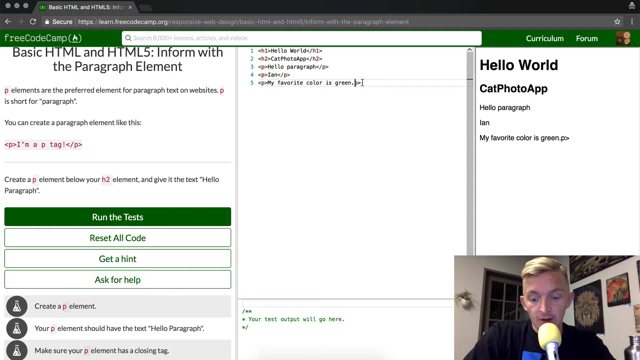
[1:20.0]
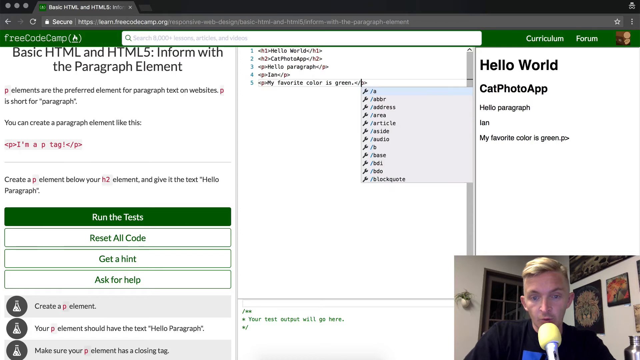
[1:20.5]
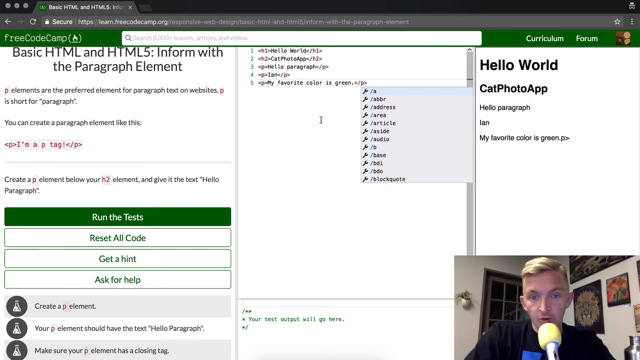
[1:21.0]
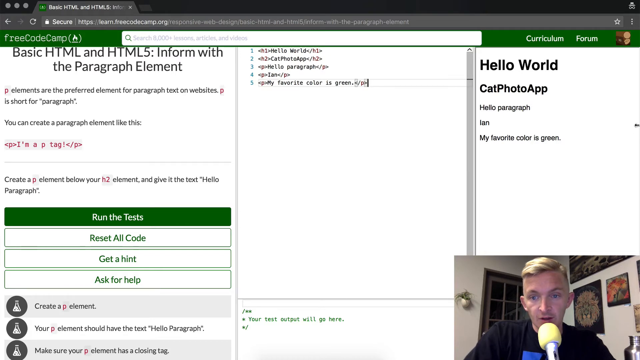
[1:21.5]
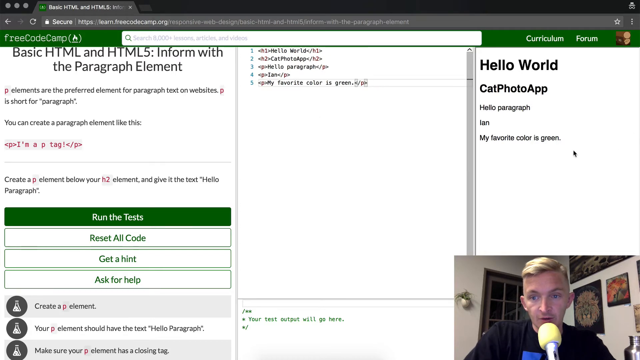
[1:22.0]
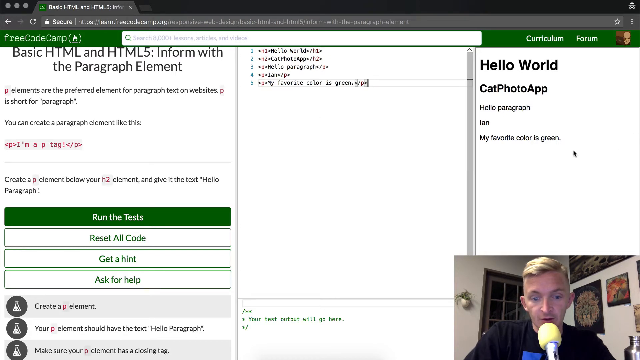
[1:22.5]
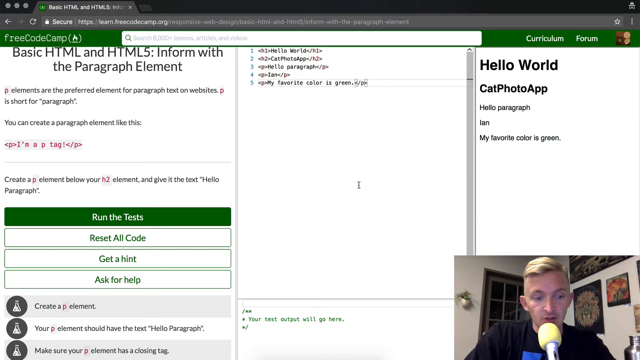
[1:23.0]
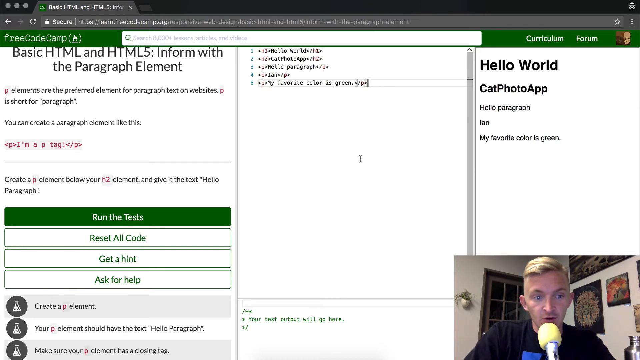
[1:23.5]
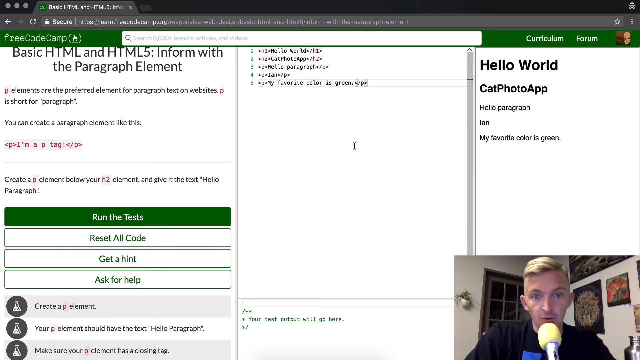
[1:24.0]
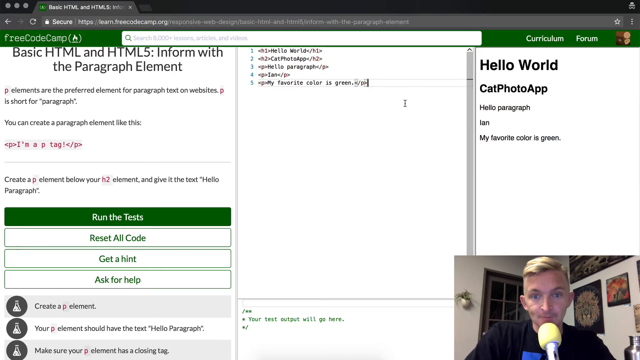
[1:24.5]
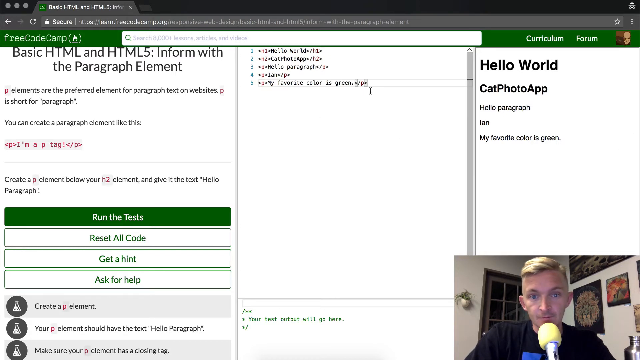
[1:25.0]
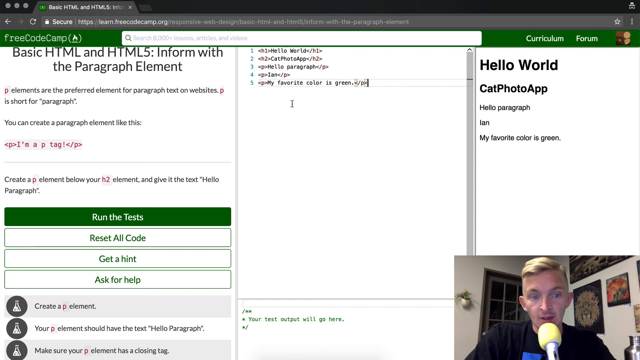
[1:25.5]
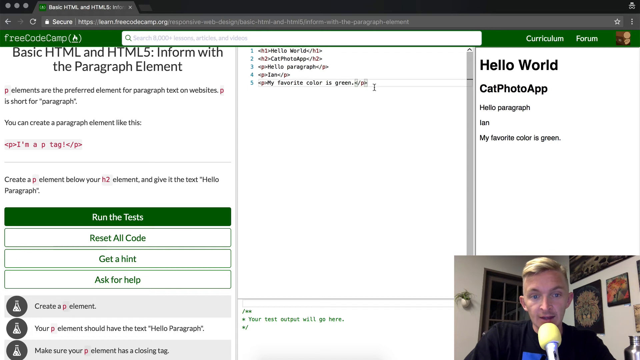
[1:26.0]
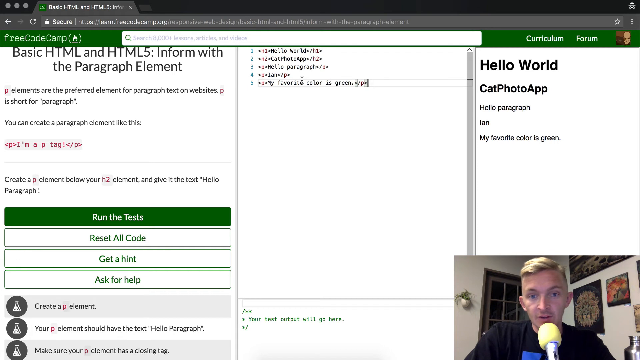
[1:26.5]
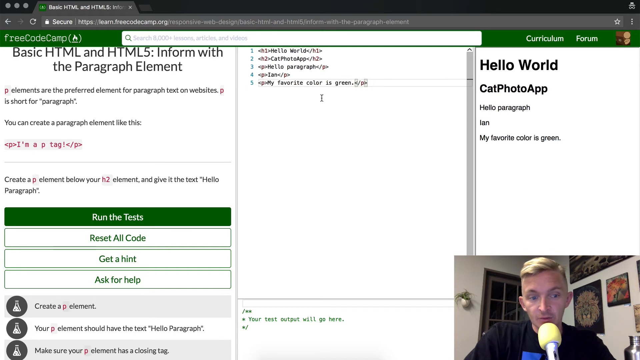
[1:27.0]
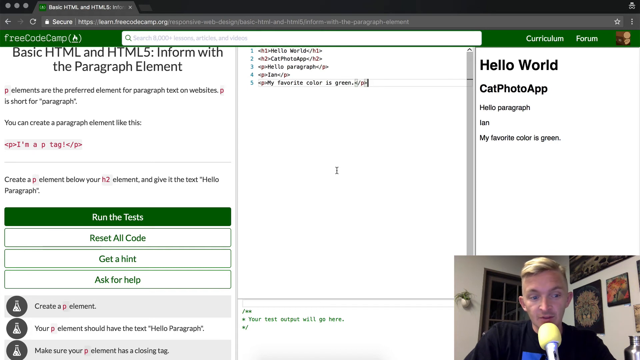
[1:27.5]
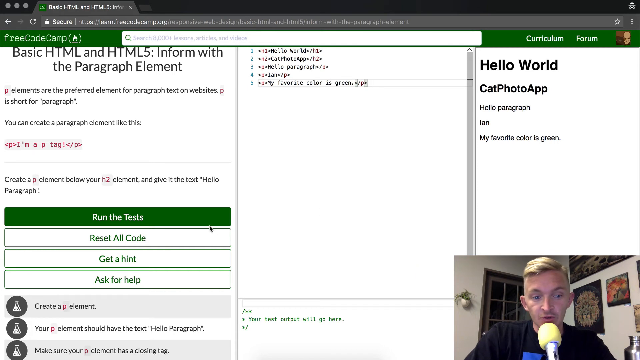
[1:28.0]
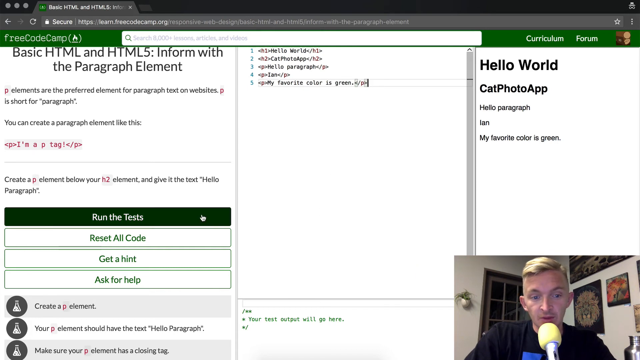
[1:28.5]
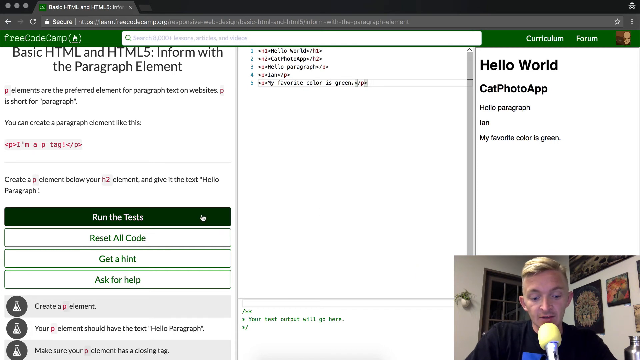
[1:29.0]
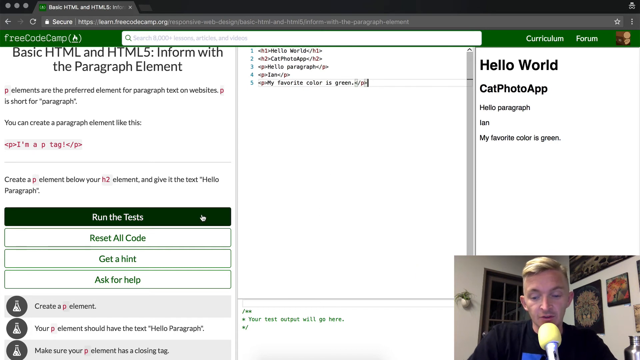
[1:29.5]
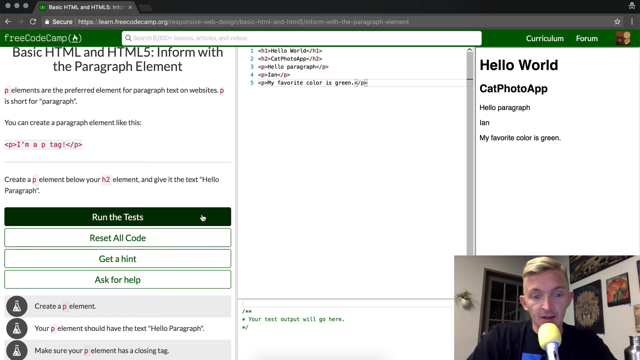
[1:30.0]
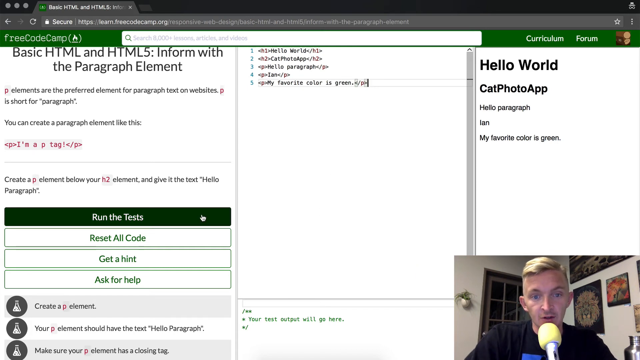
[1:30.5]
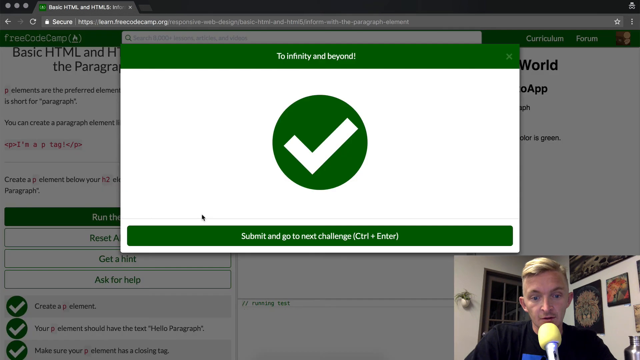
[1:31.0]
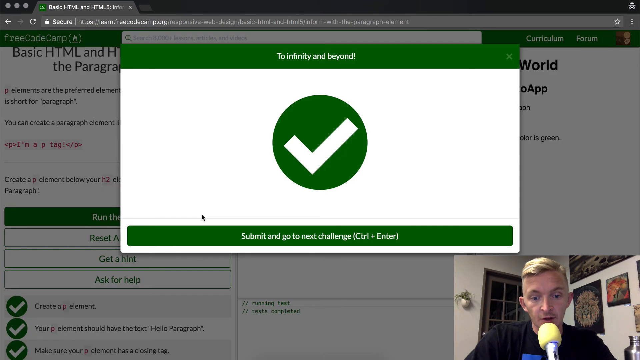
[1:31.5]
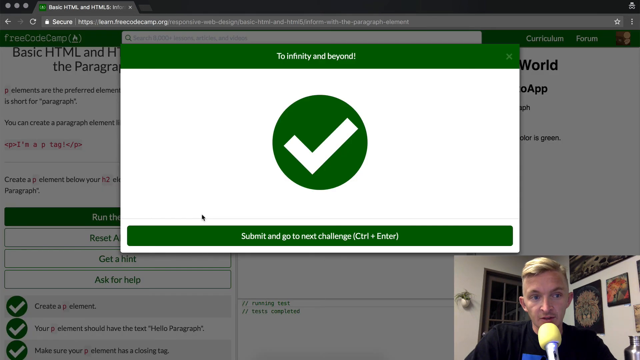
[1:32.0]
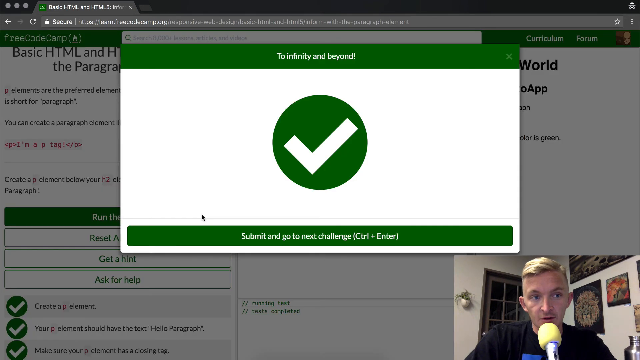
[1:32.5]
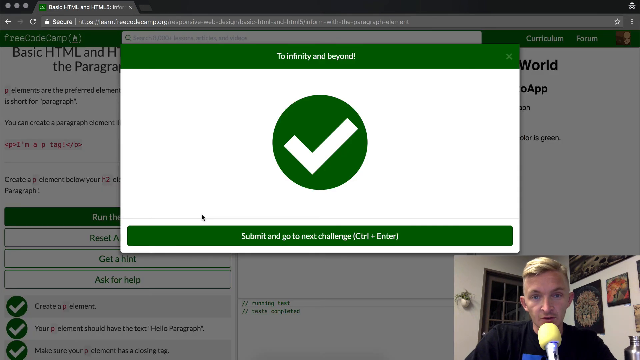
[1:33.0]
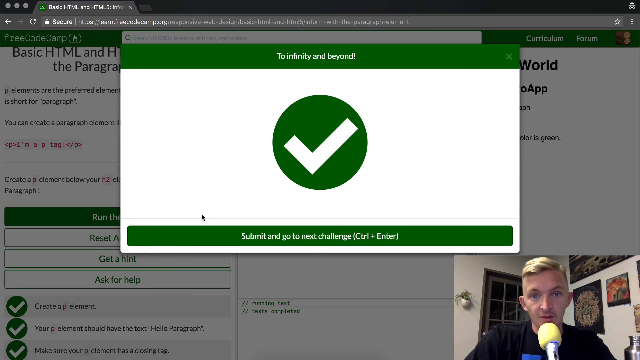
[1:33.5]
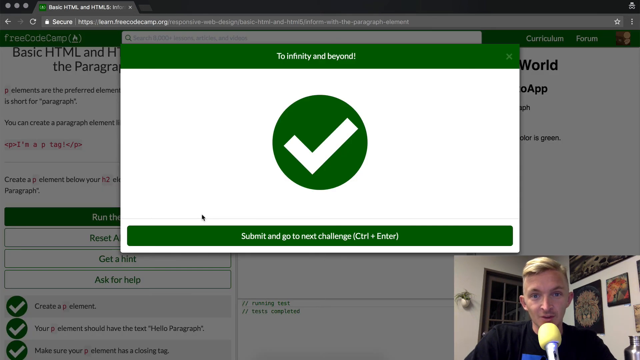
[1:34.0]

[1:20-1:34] The website, Free Code Camp, shows a message reading "submit and go to the next challenge", indicating challenges to complete on the site. A correct sign appears as a green and white tick once a course is completed. The man seems to be explaining everything about the website.